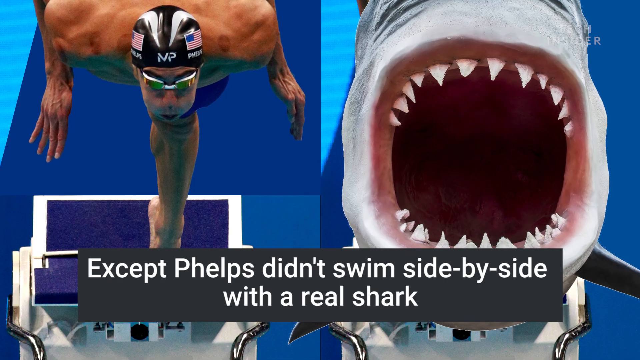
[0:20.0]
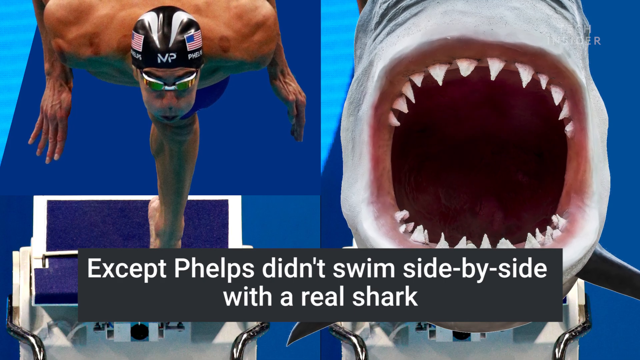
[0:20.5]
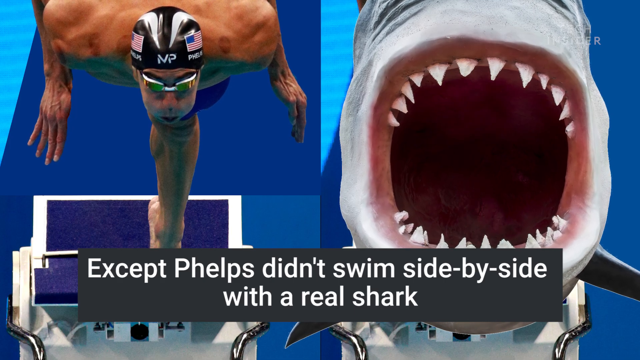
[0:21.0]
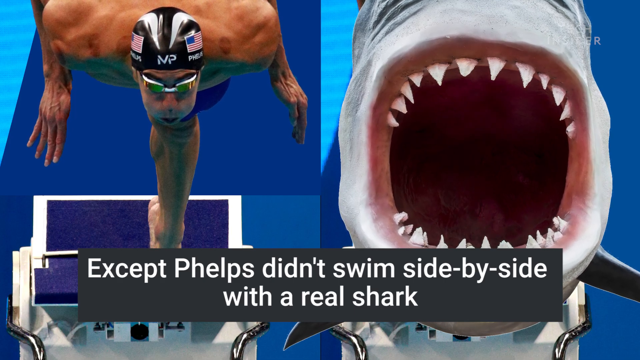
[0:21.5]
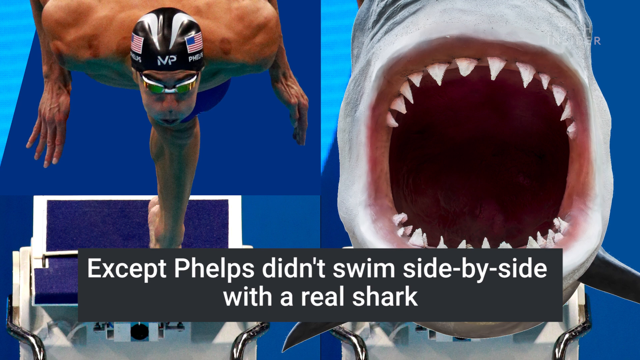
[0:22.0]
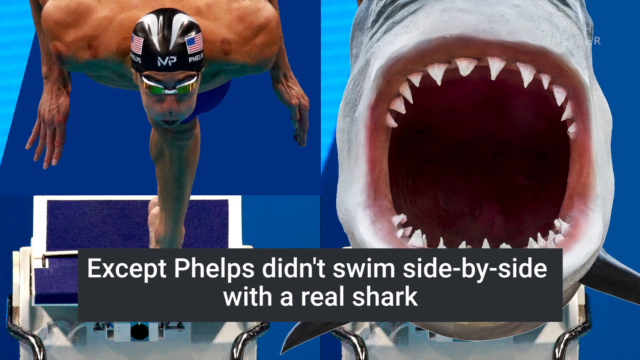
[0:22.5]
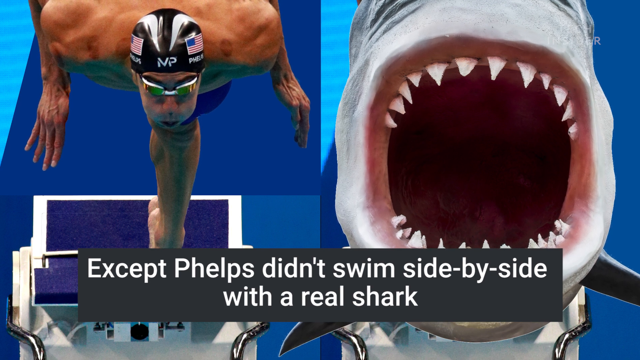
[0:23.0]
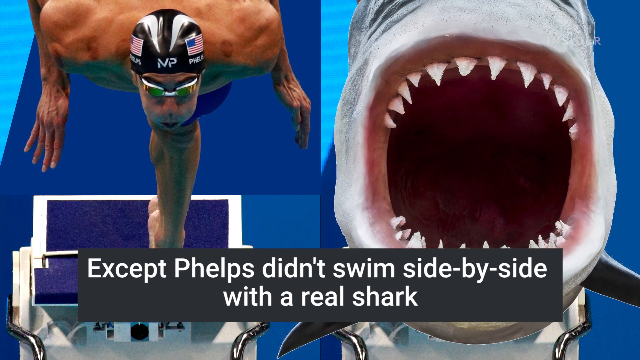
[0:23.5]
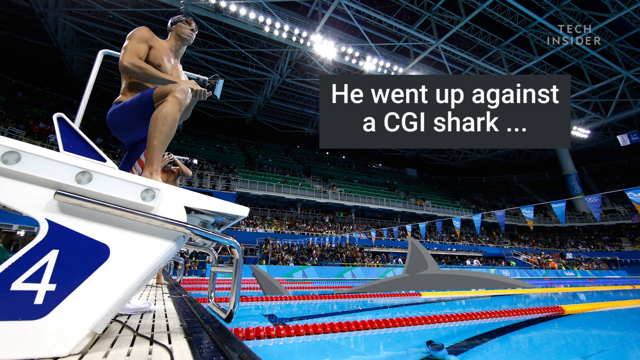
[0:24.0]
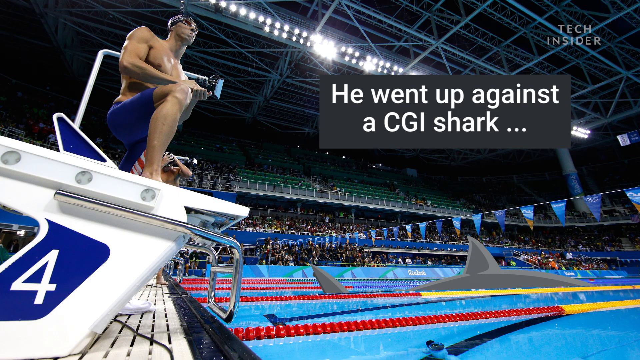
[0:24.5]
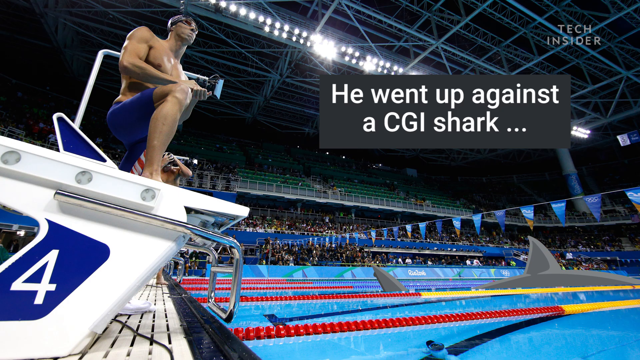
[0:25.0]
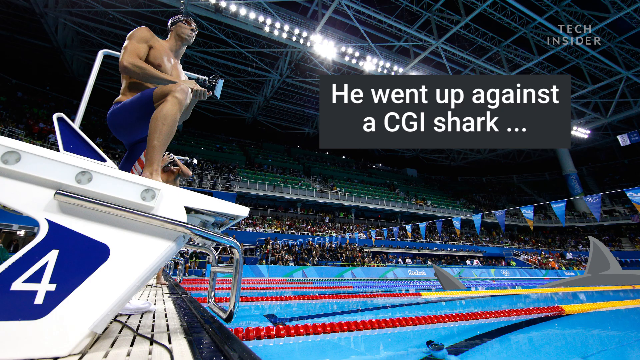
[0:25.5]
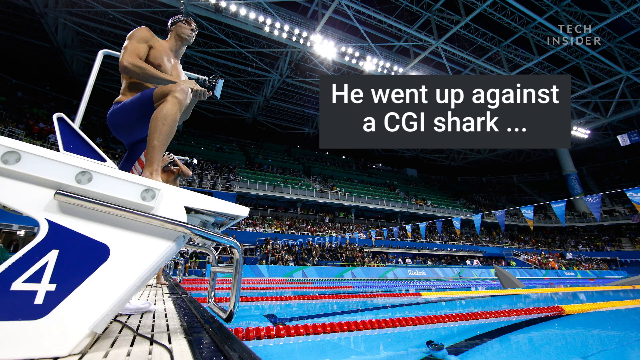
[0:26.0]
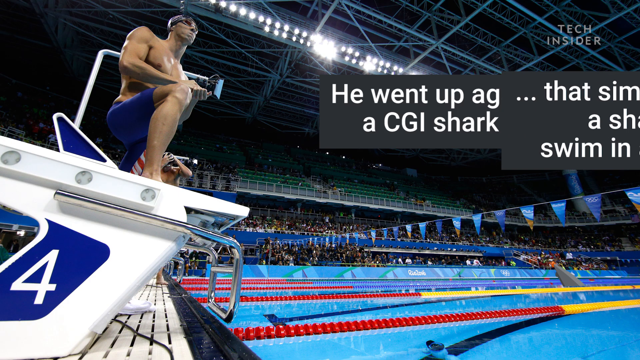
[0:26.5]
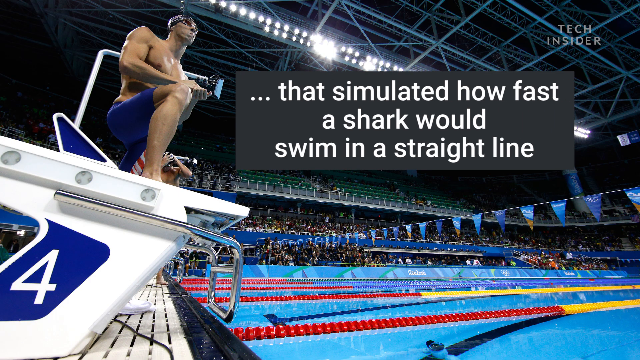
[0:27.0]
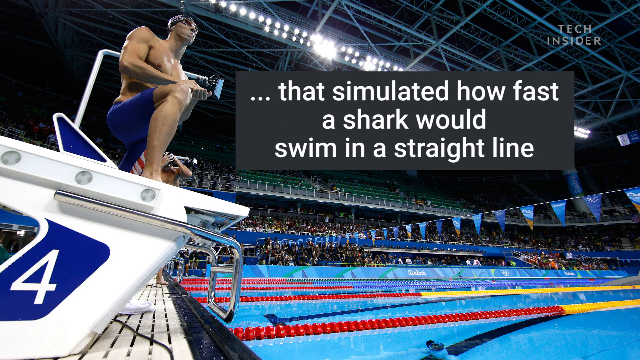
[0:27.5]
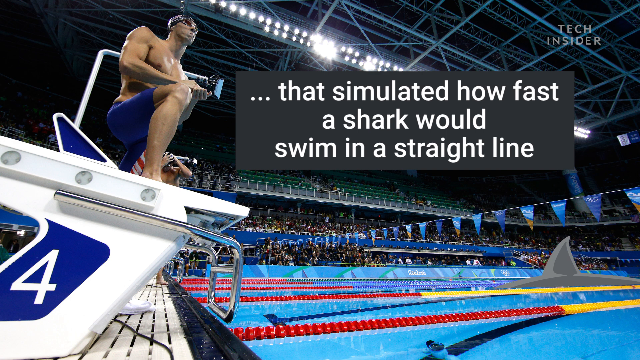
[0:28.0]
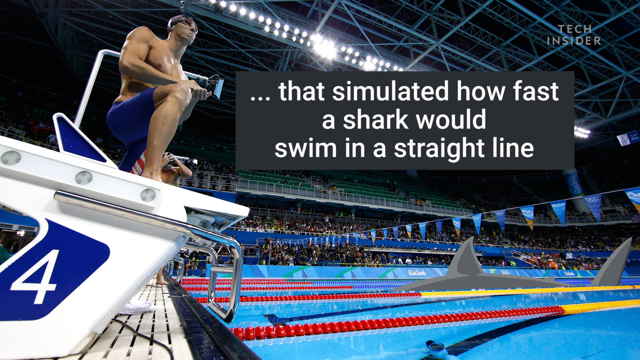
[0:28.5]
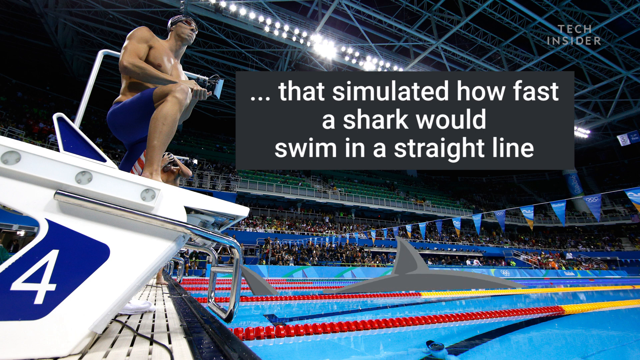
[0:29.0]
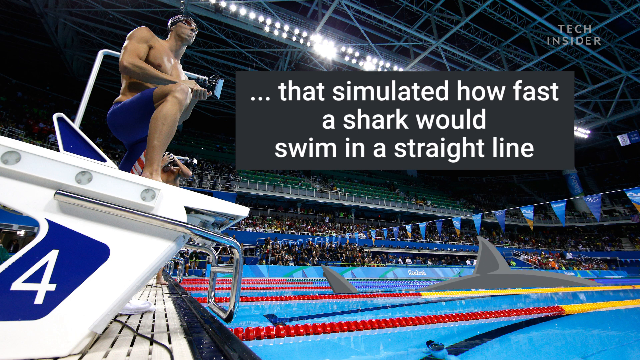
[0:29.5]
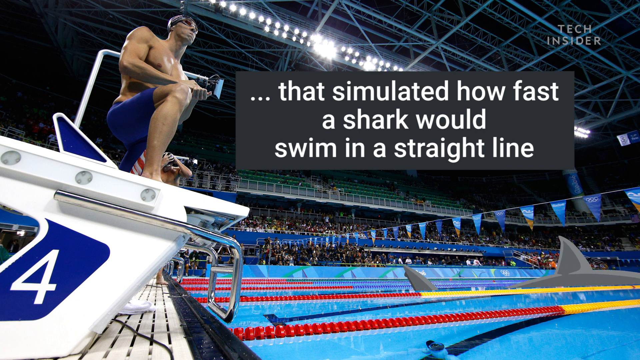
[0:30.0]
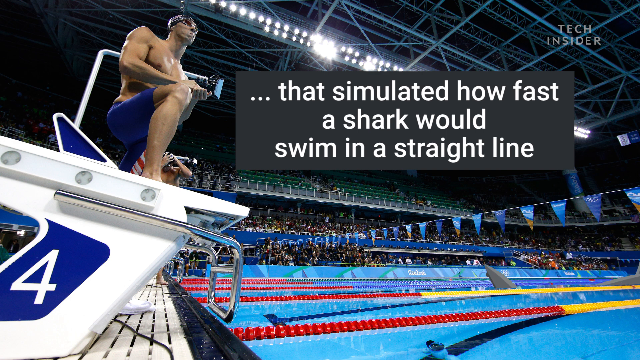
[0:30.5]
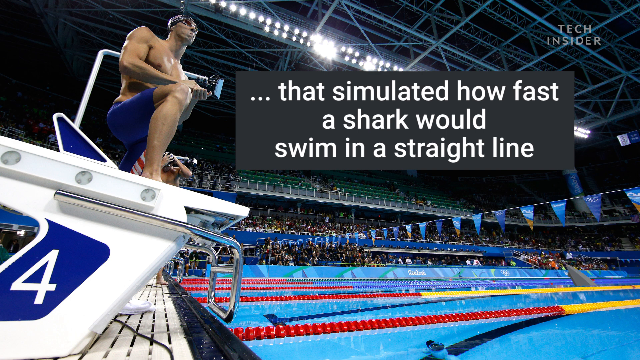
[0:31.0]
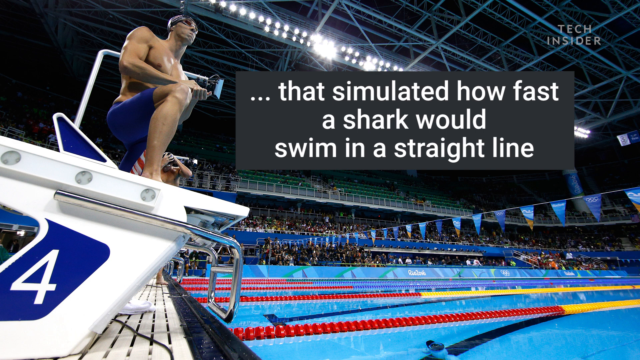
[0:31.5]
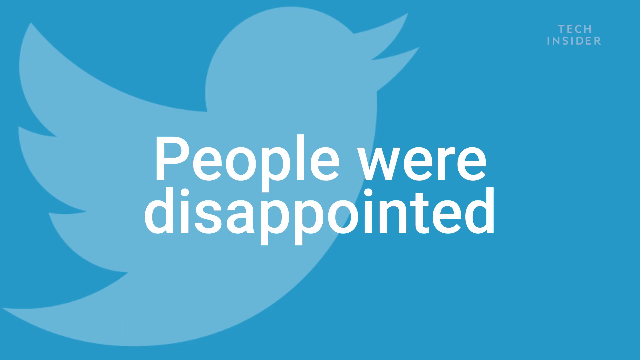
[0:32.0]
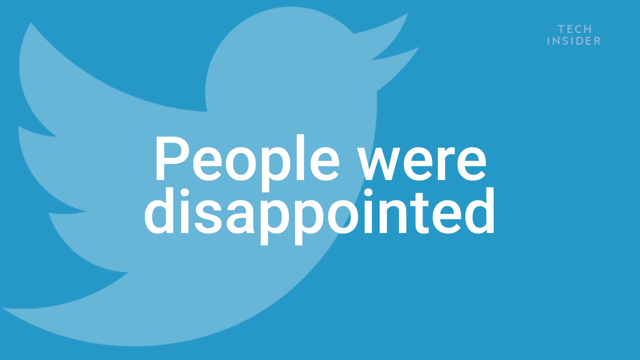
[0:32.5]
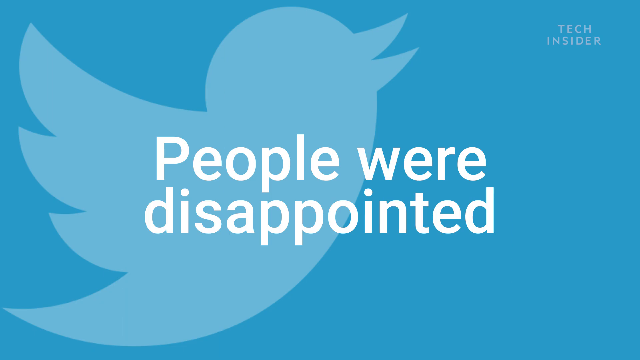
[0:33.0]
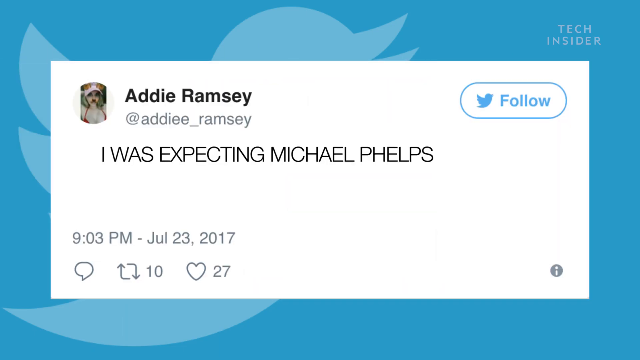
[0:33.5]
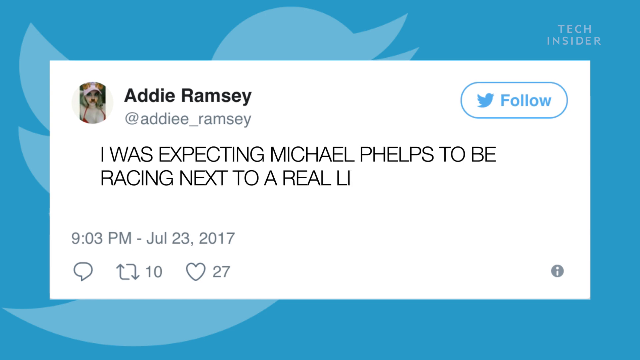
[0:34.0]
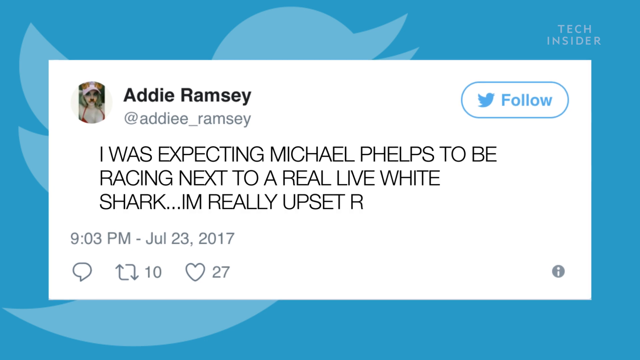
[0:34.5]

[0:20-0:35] Phelps swims in the left lane while a shark swims in the right lane. The side-by-side race is a CGI simulation rather than real footage of Phelps next to a shark.